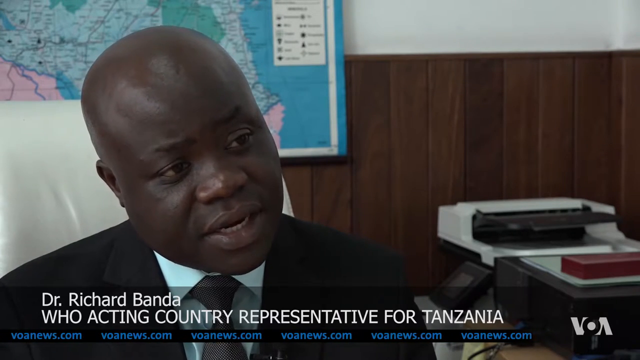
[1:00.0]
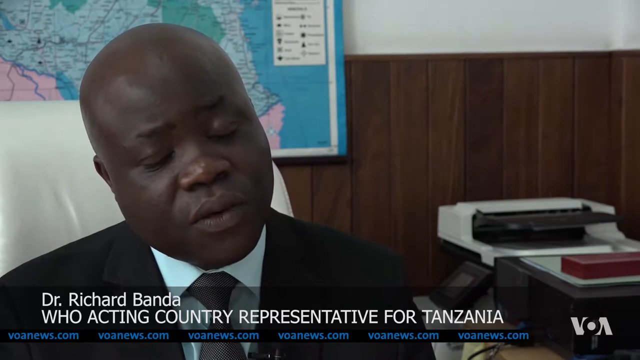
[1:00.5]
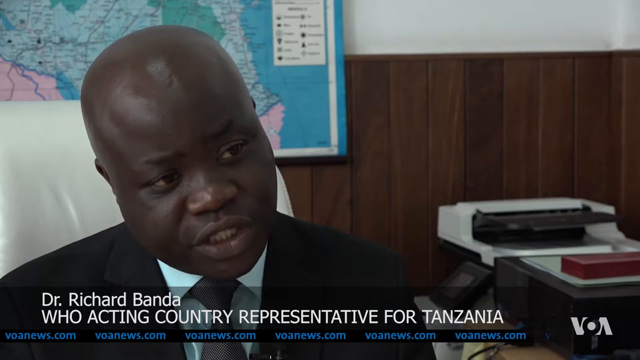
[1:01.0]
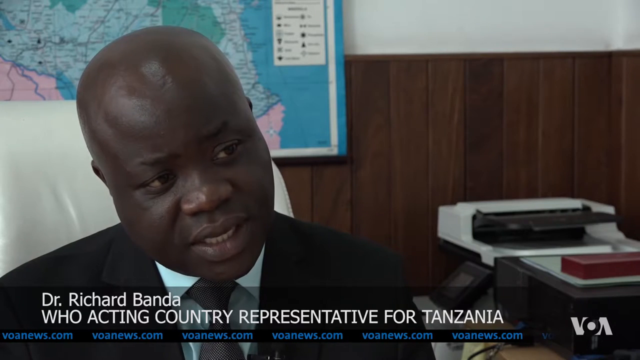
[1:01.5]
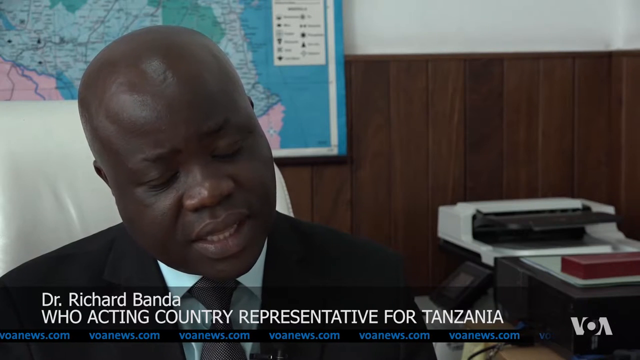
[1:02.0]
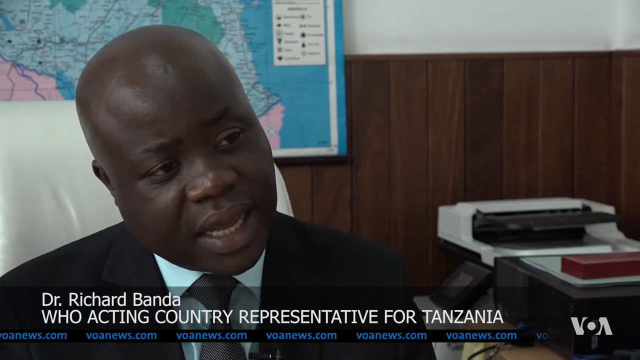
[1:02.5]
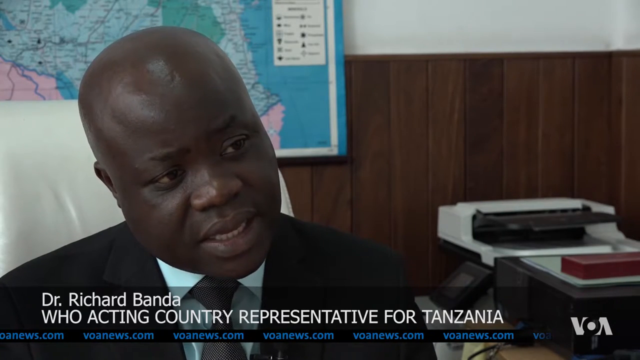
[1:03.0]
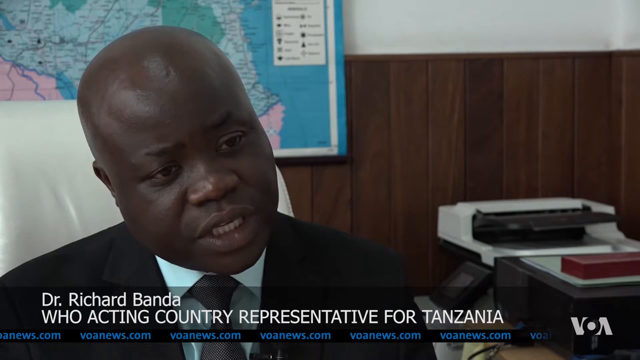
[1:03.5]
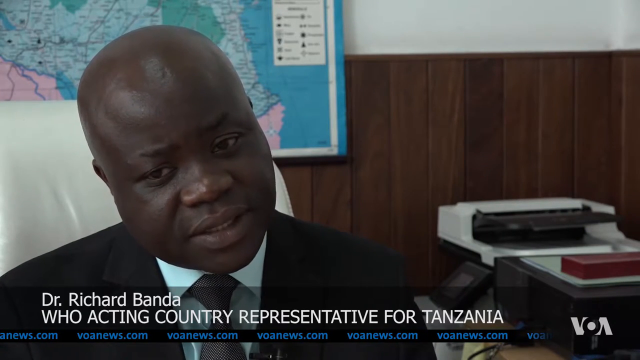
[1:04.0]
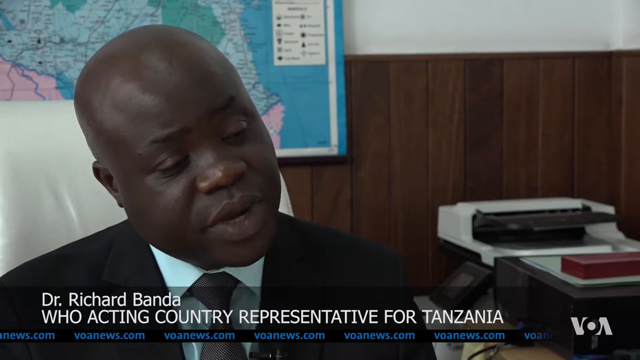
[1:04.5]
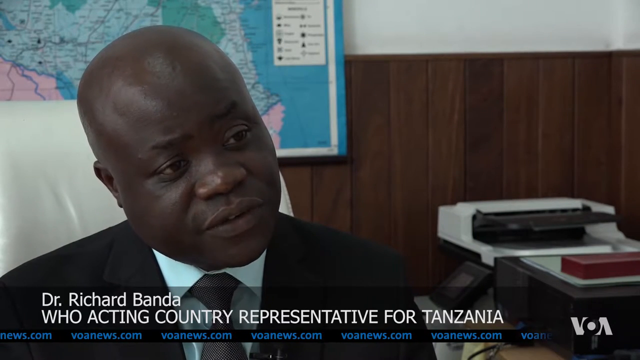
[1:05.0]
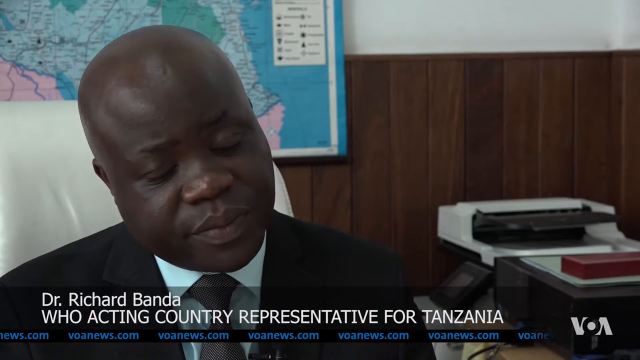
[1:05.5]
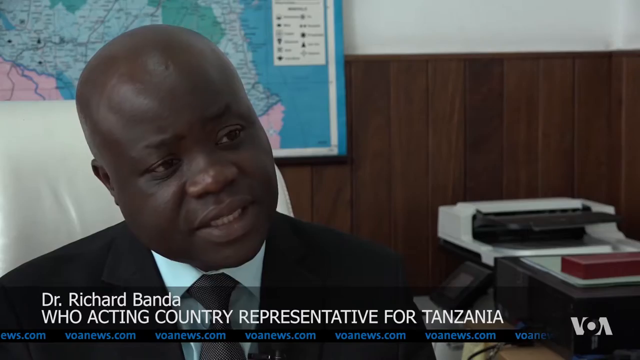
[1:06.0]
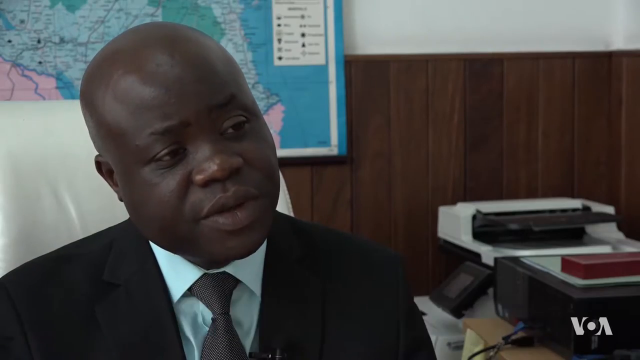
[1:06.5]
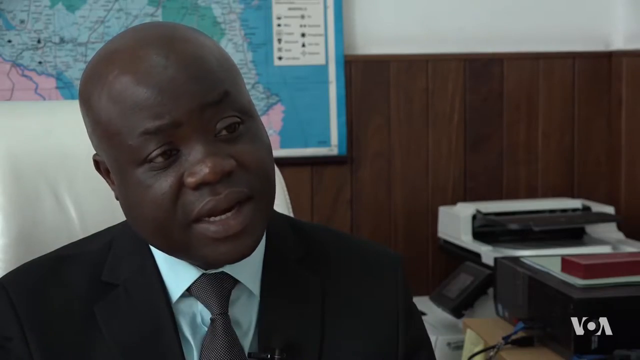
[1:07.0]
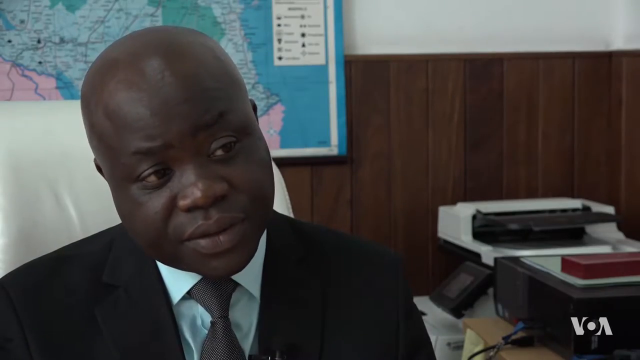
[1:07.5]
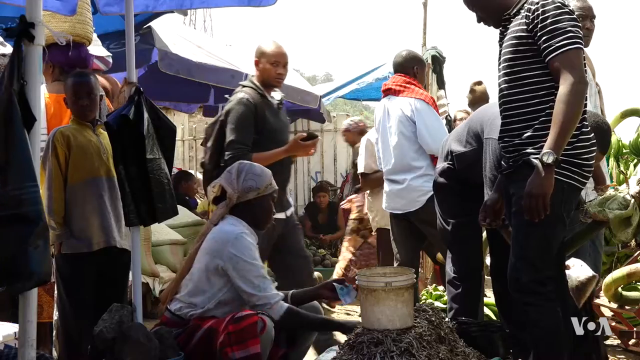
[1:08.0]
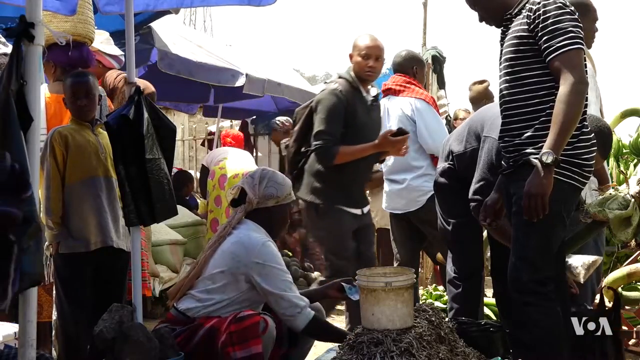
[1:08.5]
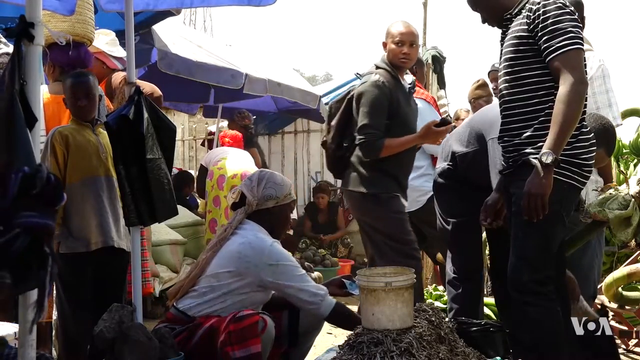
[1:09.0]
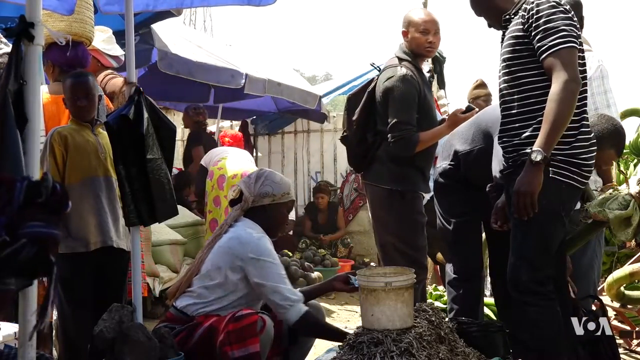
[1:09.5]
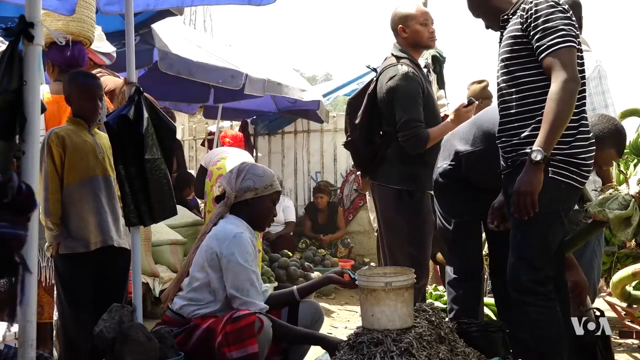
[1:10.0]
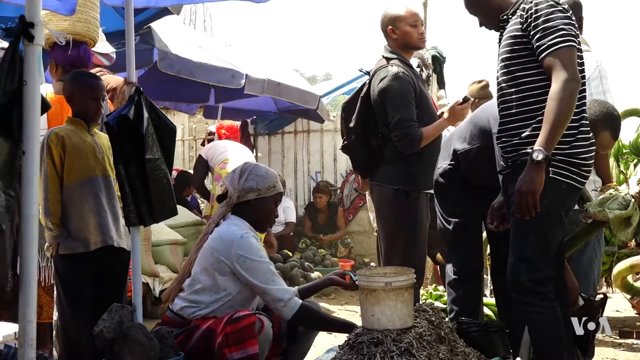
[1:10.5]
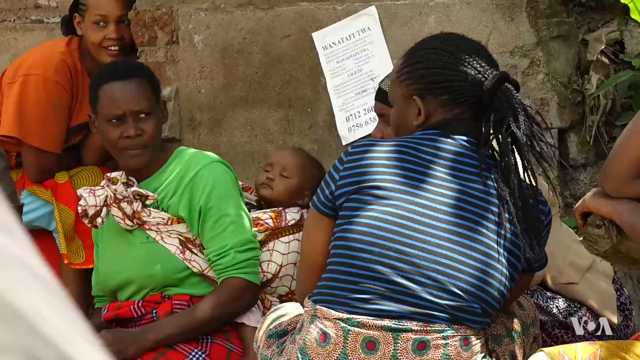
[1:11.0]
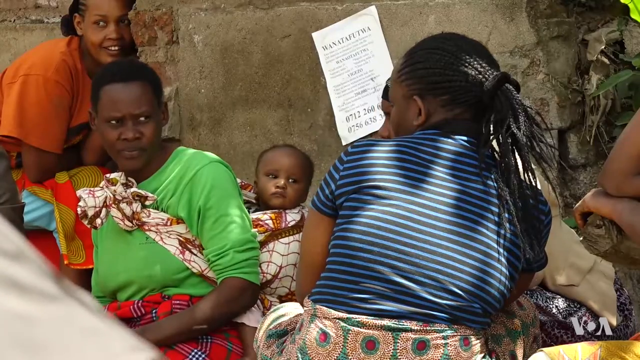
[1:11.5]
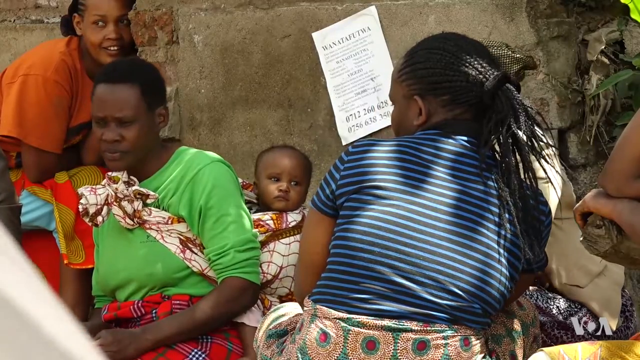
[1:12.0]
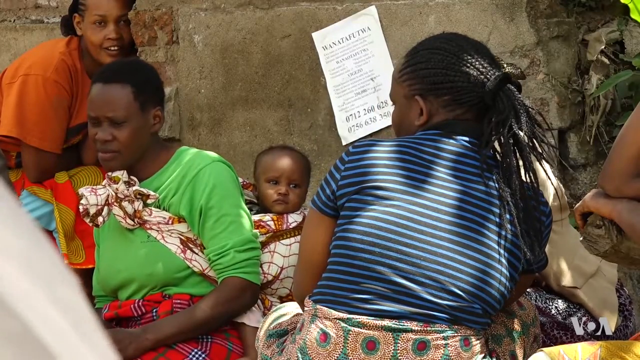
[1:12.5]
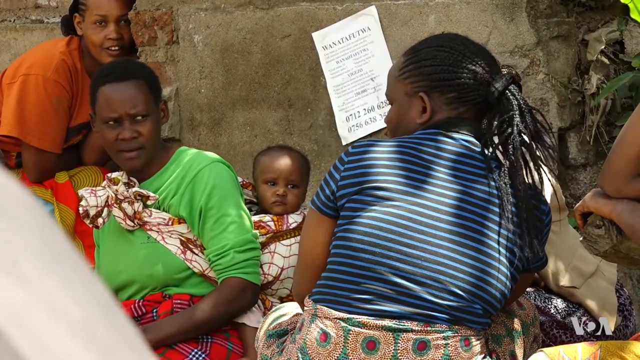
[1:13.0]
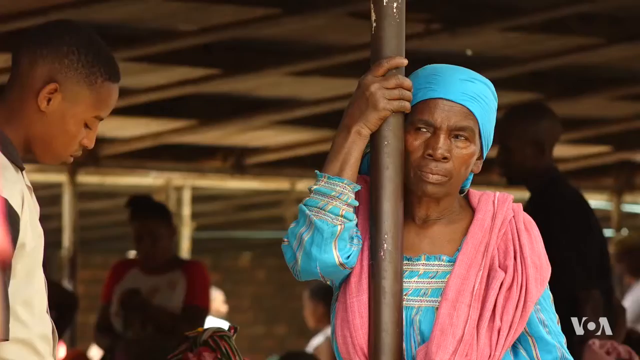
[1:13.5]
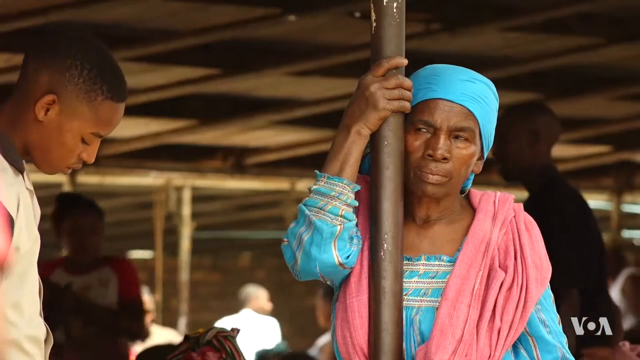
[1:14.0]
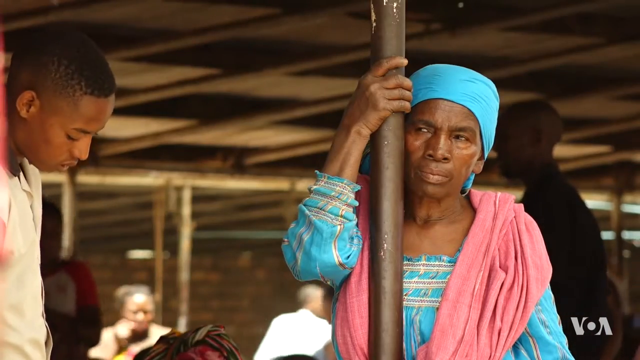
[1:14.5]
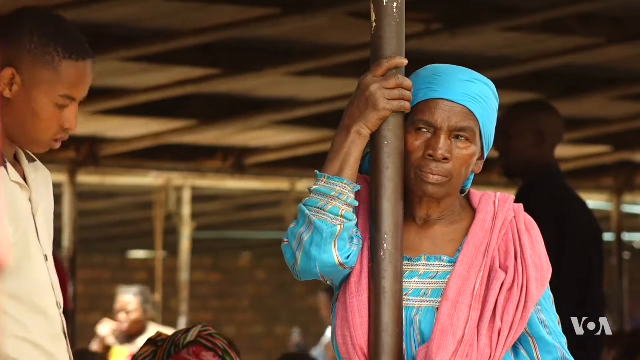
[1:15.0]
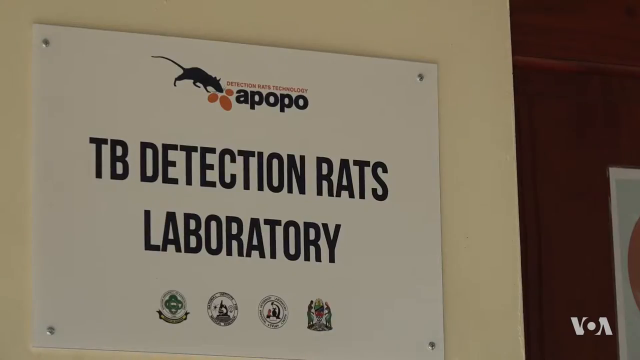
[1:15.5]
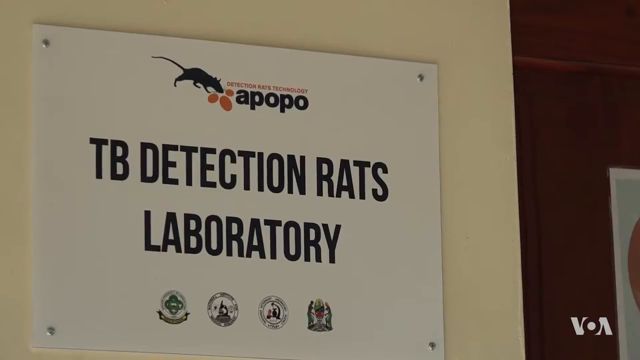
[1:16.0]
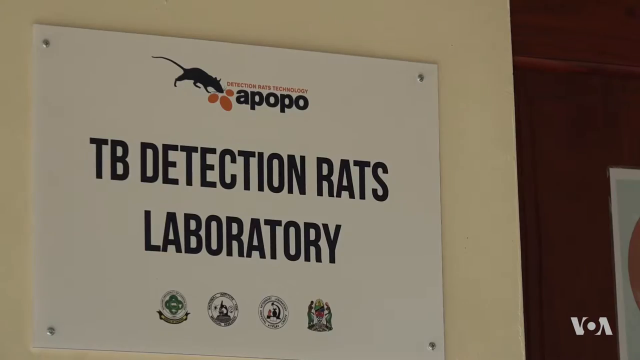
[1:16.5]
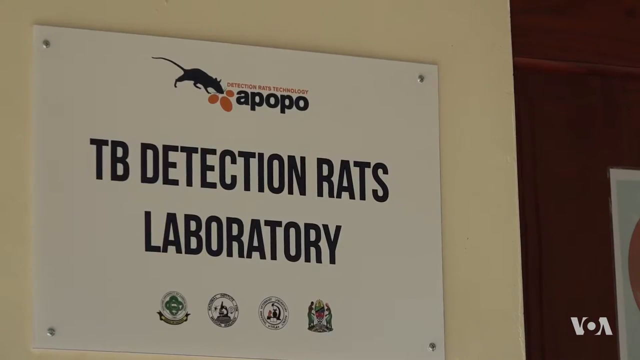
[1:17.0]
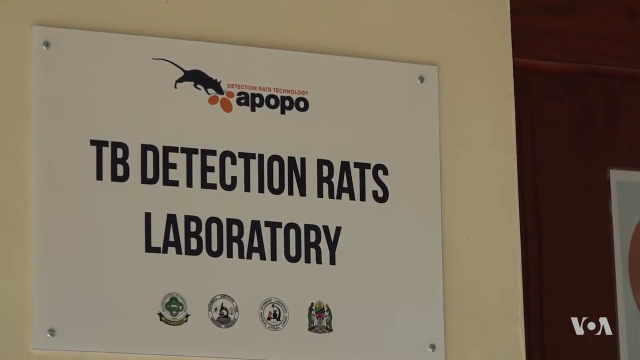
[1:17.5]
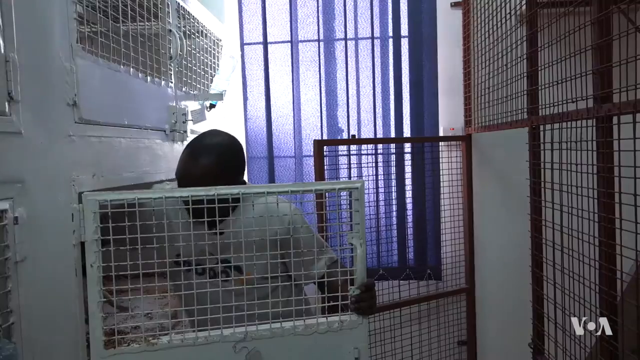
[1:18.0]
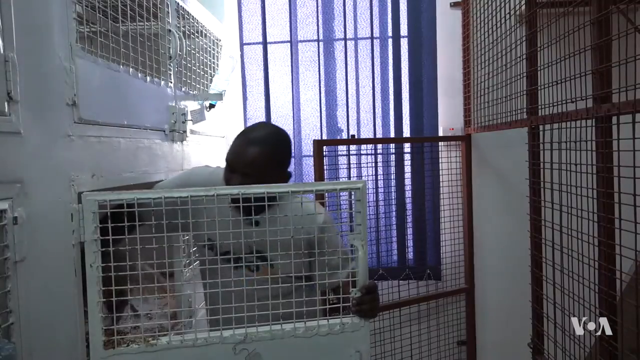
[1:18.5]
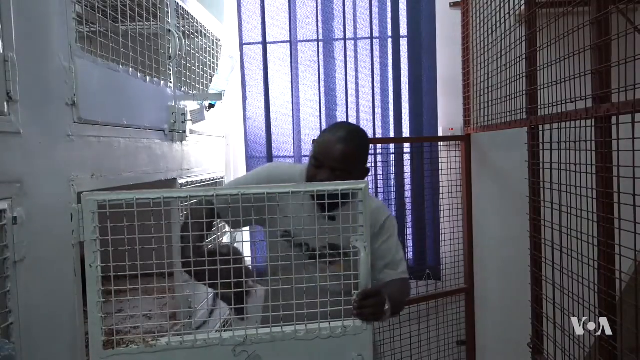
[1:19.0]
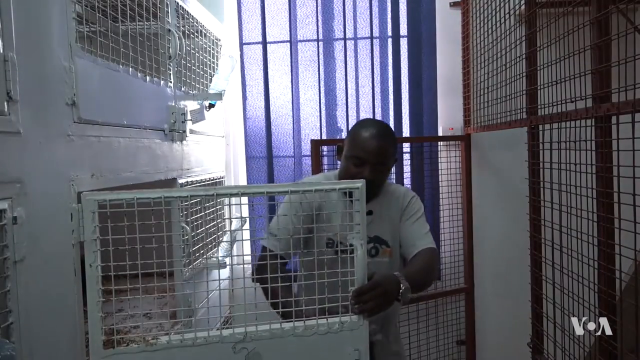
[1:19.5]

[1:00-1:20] Dr. Richard Bonda continues to be interviewed, speaking calmly. His name appears at the bottom of the screen, and below it the text reads "acting country representative for Tanzania". He wears a black vest, a turquoise undershirt and a black tie. Afterwards, a couple of people stand outside in what looks like some sort of camp; many people in various shirts are outside, and many of them look very depressed. The video then focuses back on the Opopo company, where a sign reads "TB Detection Rats Laboratory". A man, apparently the same scientist seen at the beginning, takes a rat out of one of the cages.